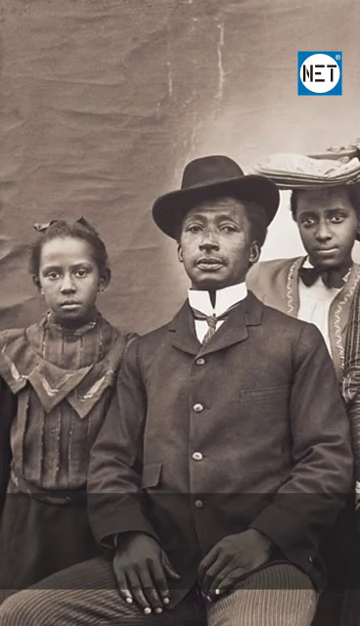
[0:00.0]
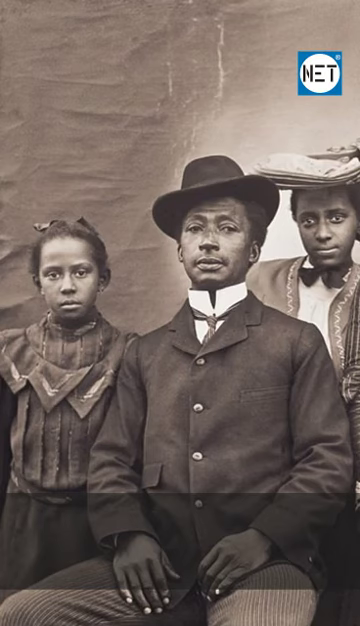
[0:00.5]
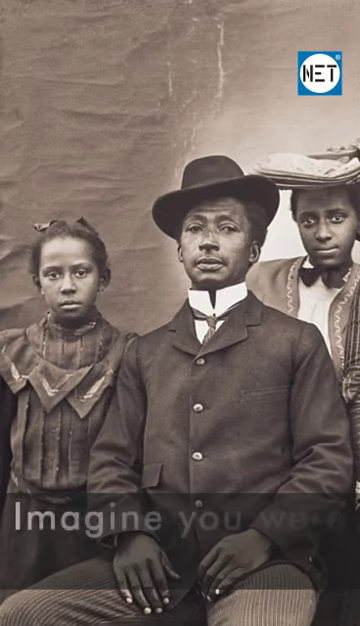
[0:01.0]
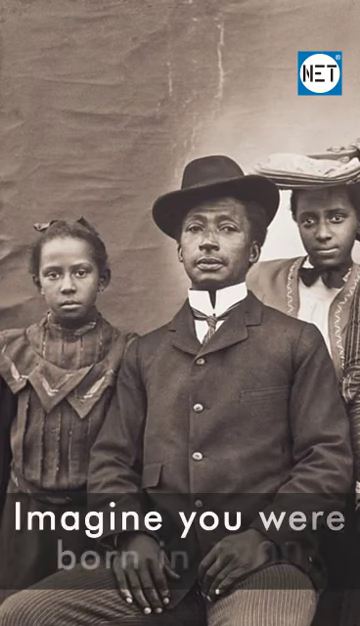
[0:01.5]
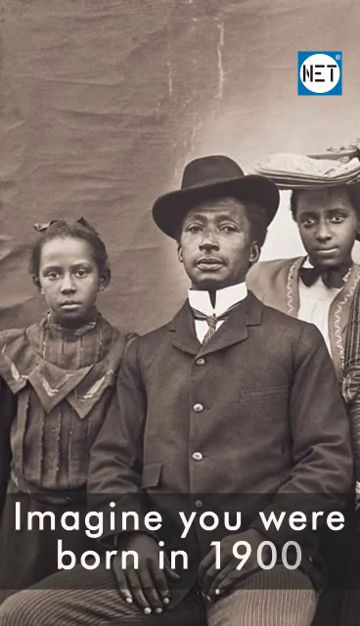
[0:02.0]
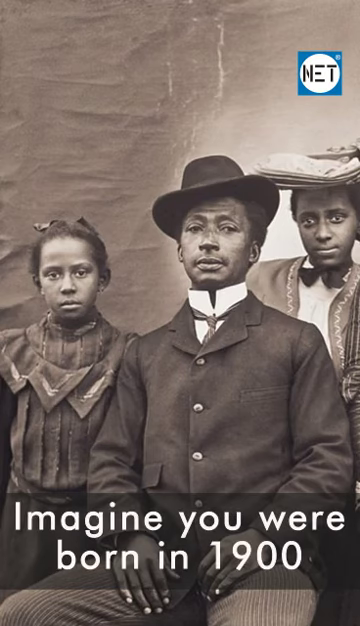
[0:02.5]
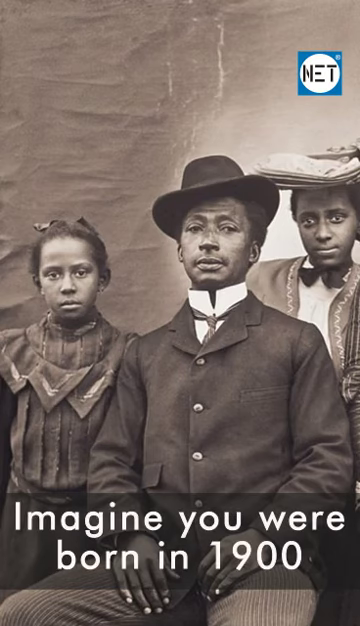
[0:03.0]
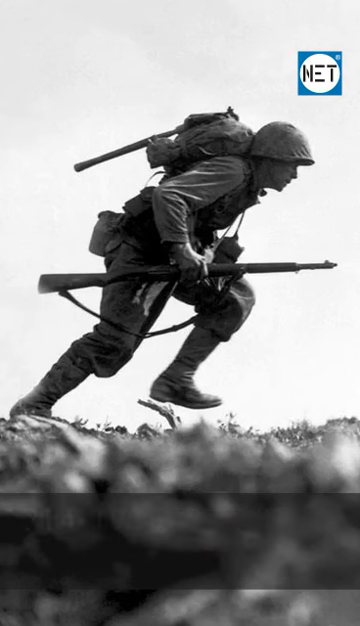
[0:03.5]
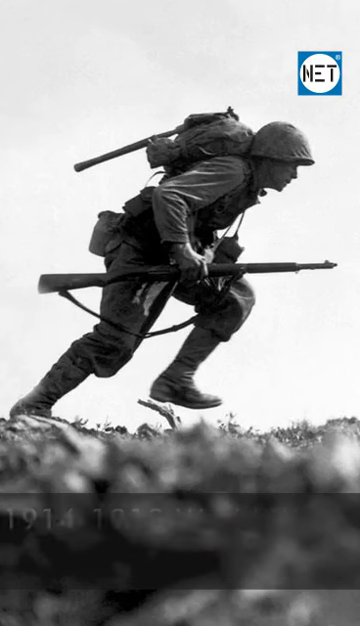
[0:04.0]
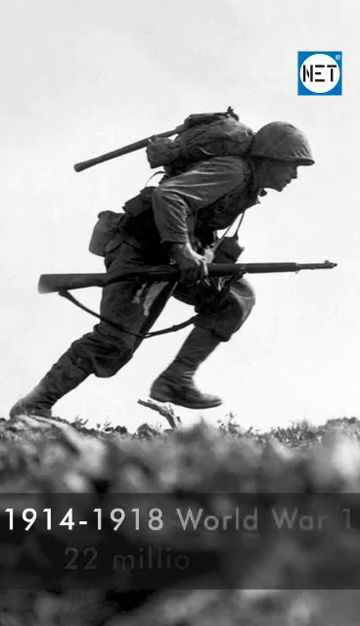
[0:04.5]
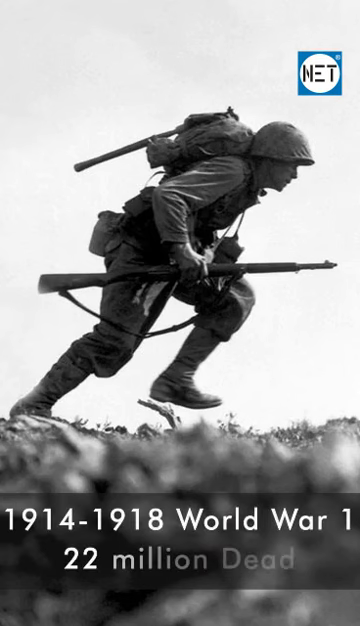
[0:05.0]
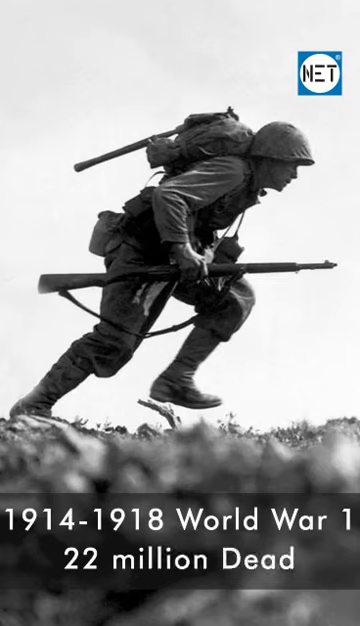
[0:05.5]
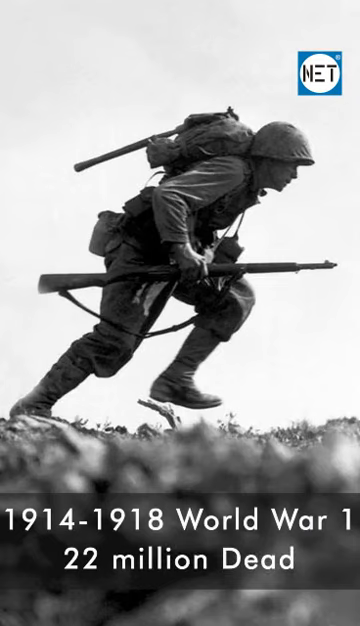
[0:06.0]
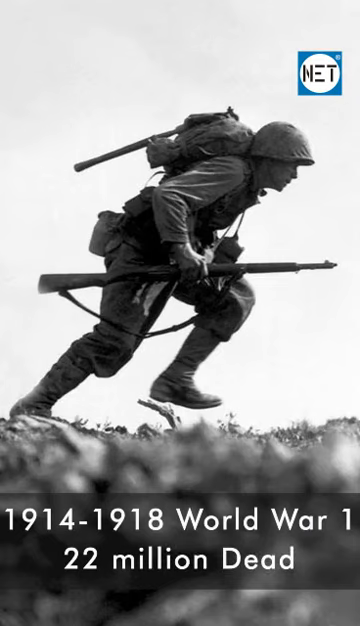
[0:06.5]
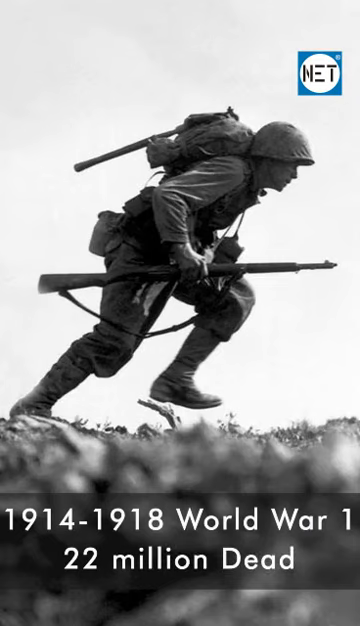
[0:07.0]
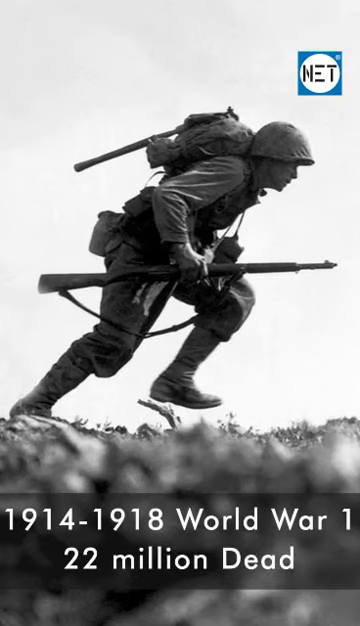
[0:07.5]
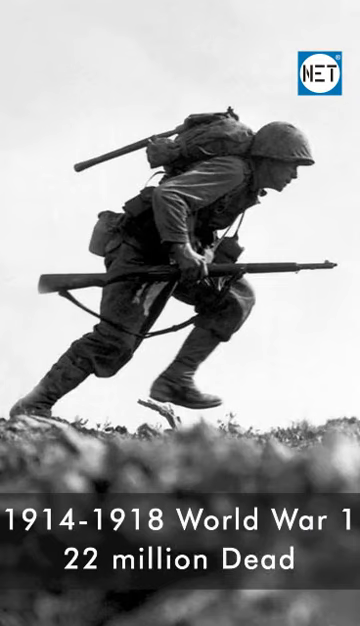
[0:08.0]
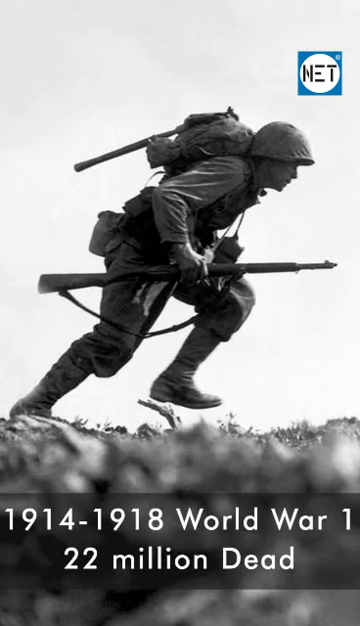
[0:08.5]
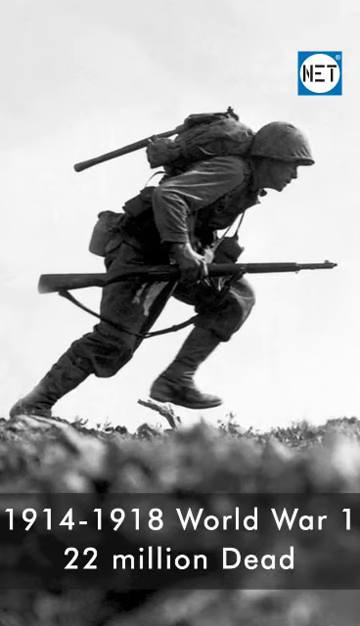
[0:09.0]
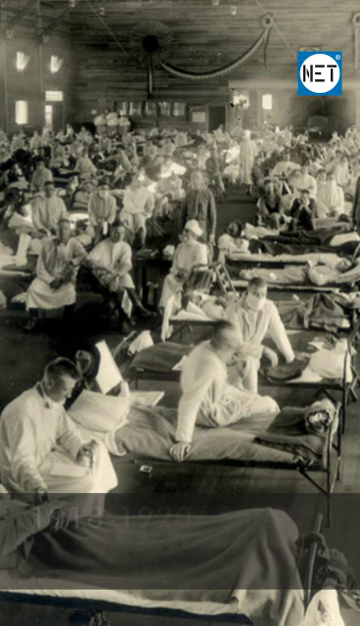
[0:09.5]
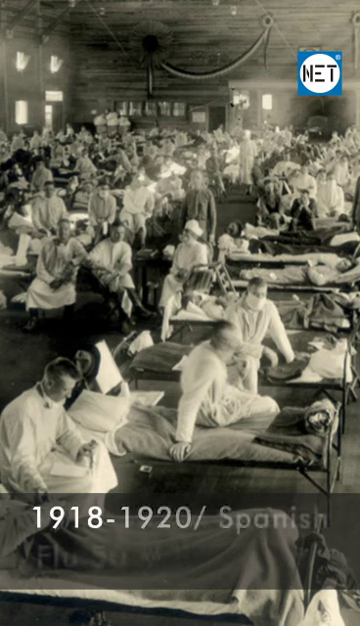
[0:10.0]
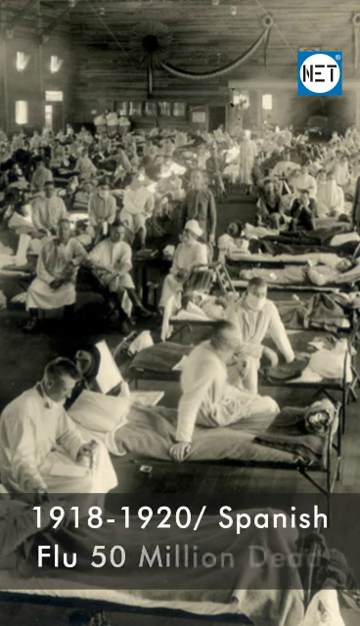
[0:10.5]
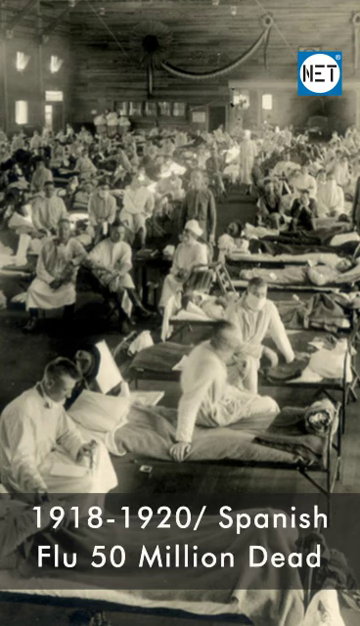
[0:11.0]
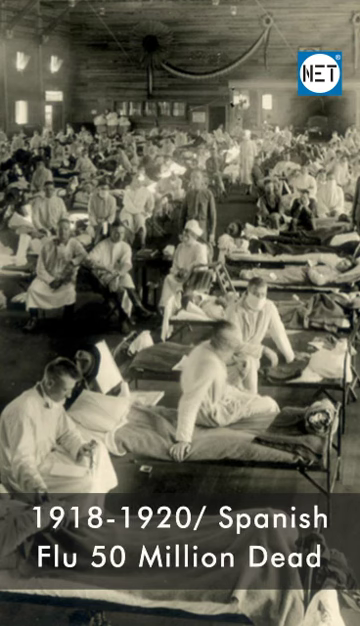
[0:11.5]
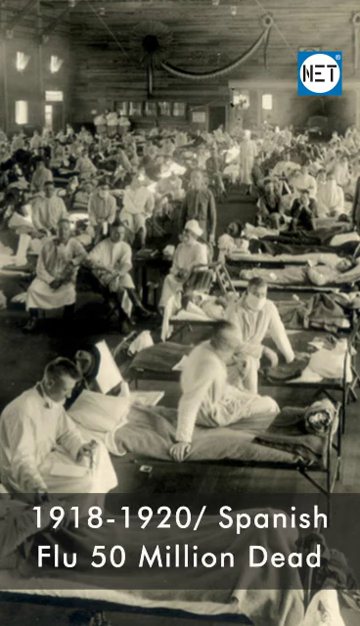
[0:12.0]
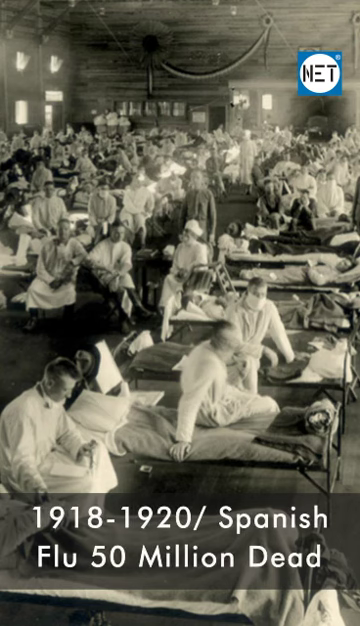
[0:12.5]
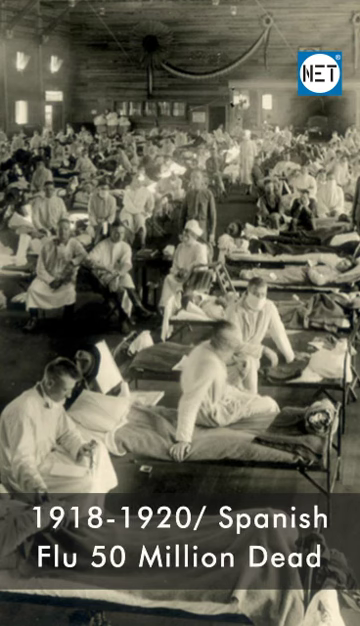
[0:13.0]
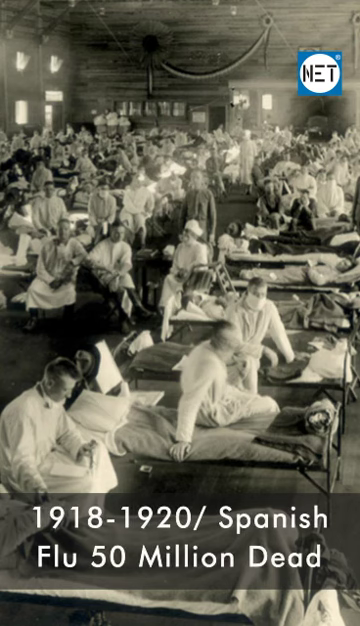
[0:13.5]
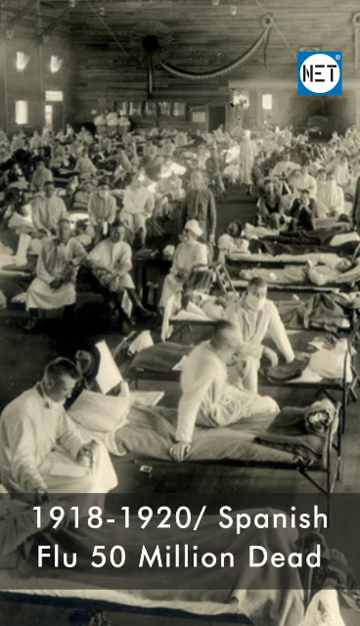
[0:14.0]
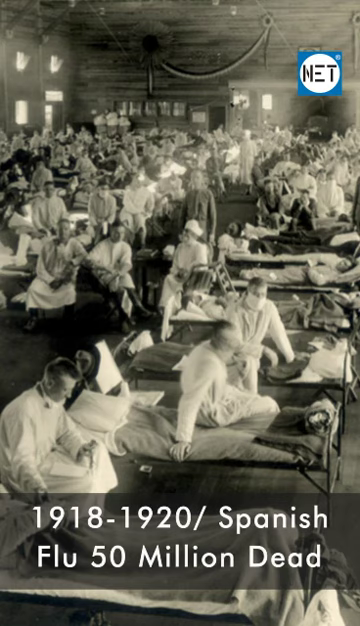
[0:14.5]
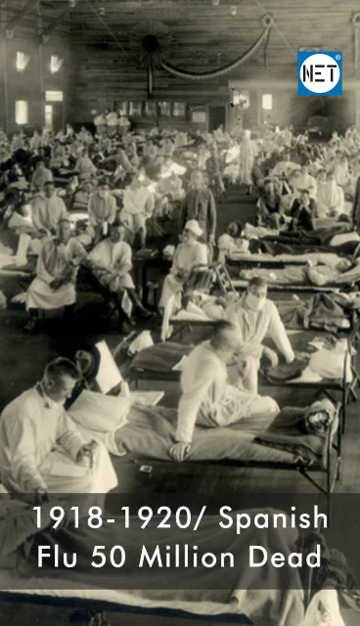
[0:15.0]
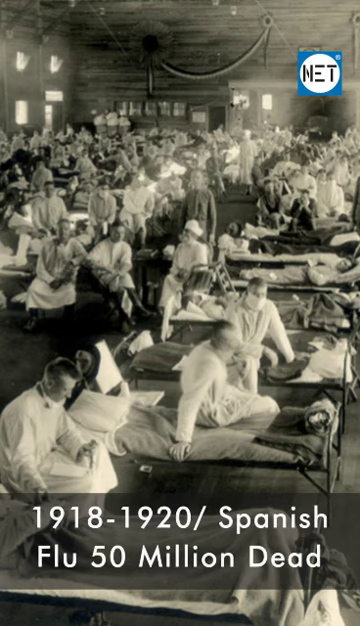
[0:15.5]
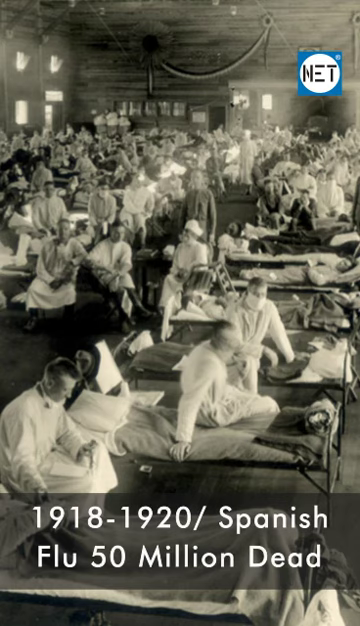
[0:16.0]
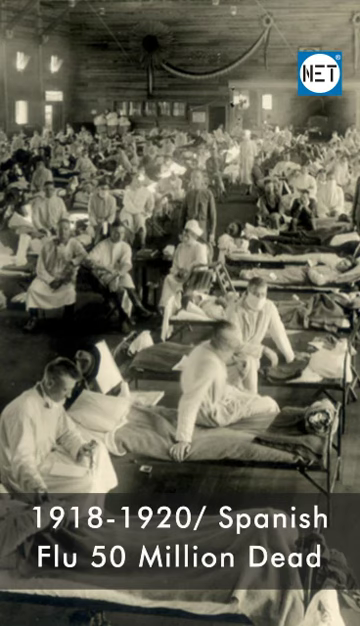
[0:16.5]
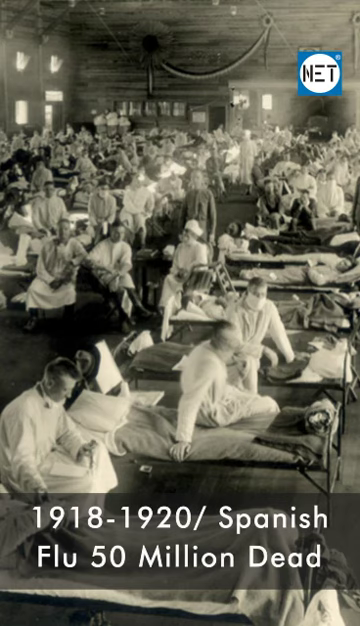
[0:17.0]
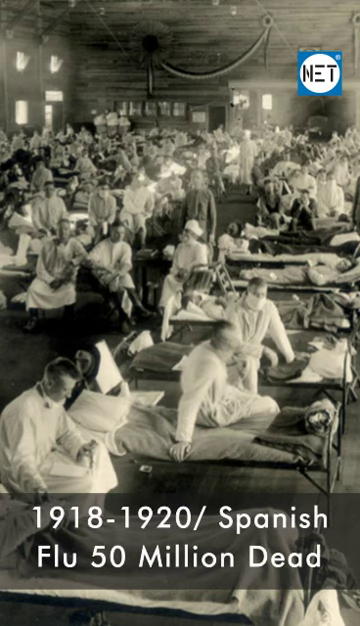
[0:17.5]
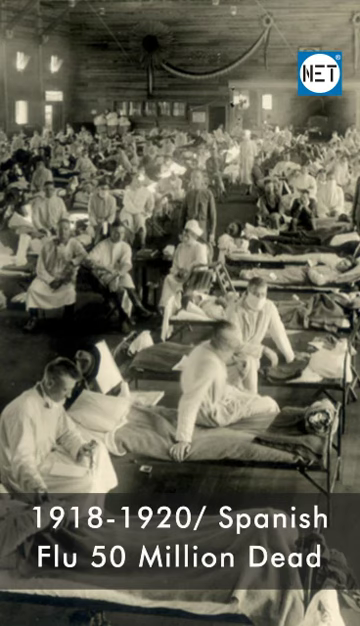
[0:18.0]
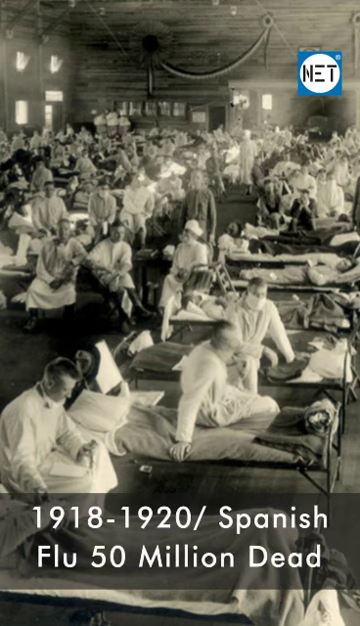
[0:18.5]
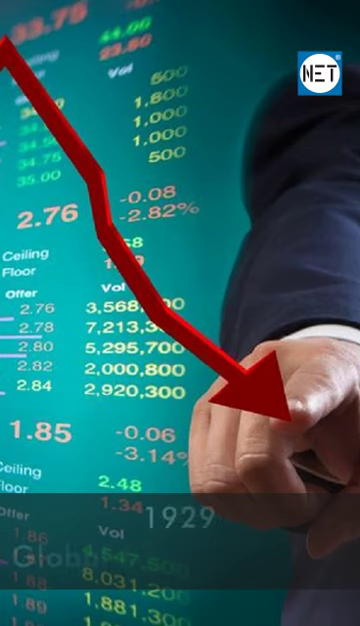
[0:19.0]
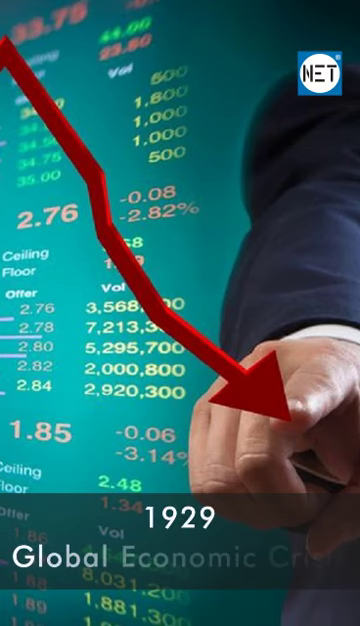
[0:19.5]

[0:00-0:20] A montage of pictures about people growing up in the early 1900s begins with a family portrait of three people. It then shows images of the tragedy of World War I, followed by images of medical issues during the Spanish Flu.